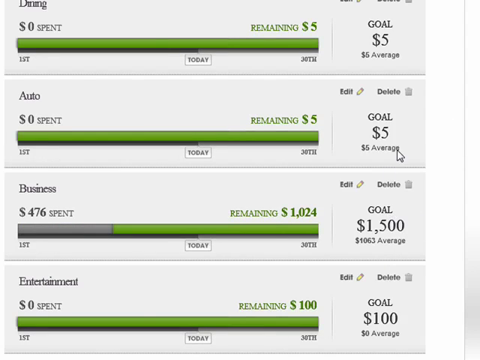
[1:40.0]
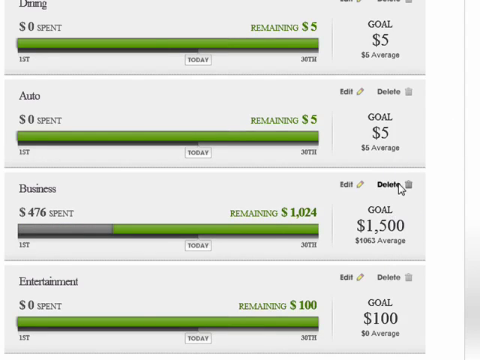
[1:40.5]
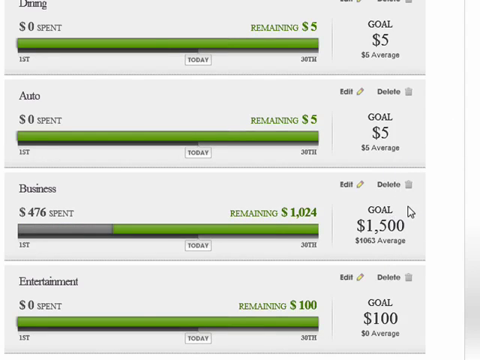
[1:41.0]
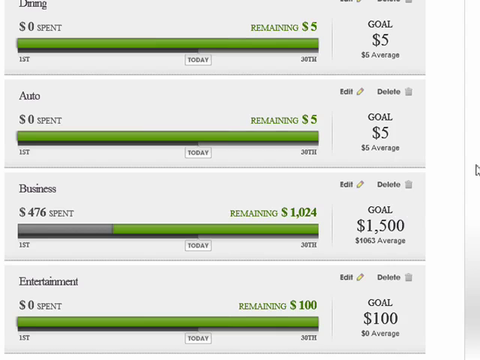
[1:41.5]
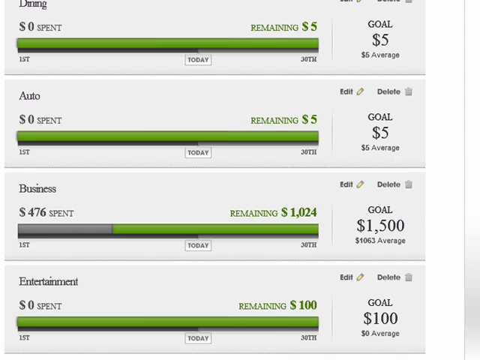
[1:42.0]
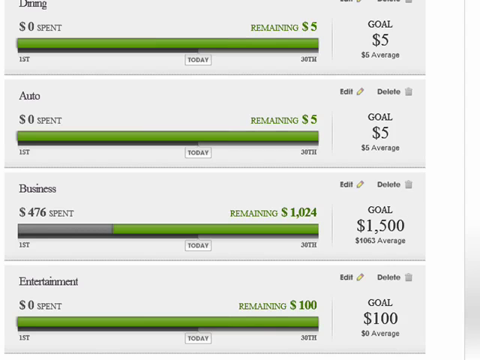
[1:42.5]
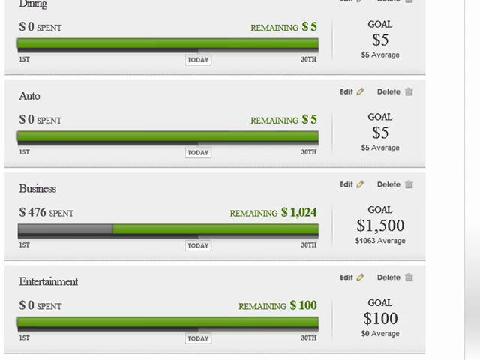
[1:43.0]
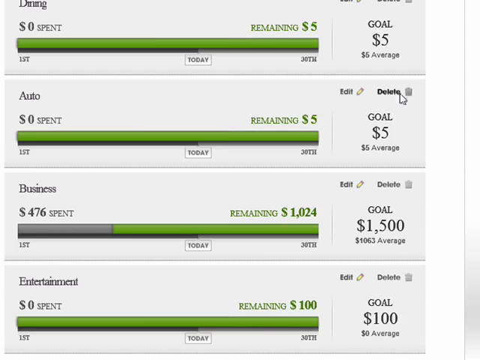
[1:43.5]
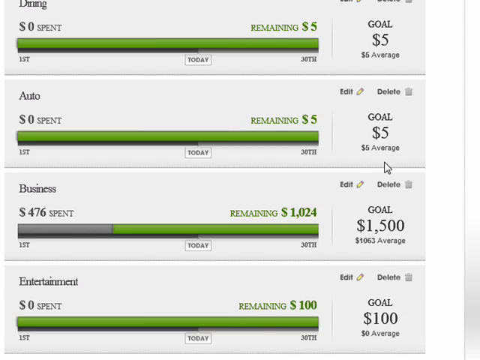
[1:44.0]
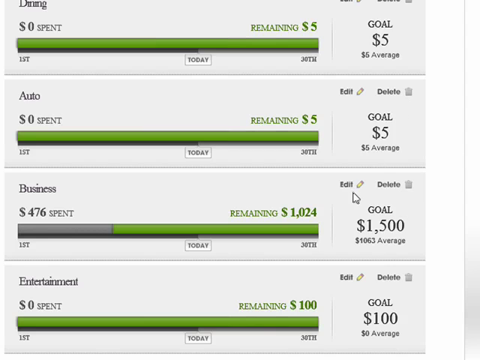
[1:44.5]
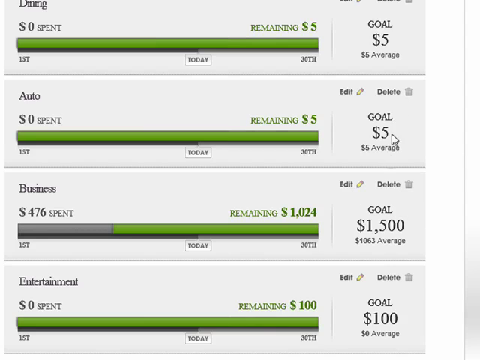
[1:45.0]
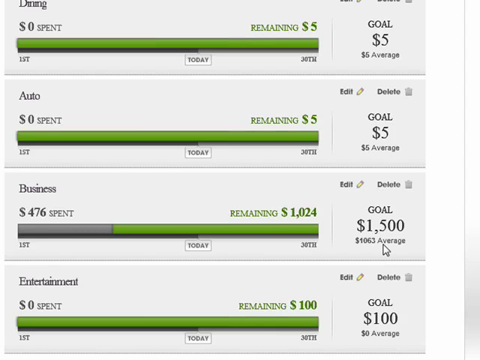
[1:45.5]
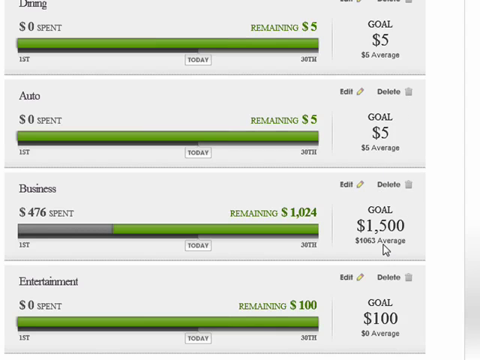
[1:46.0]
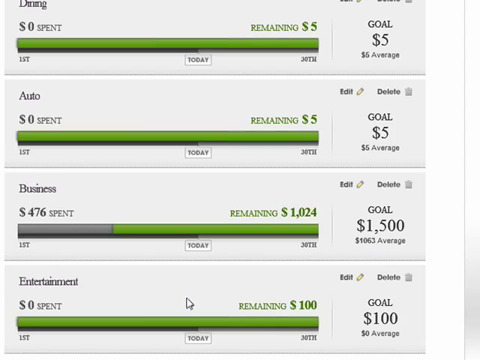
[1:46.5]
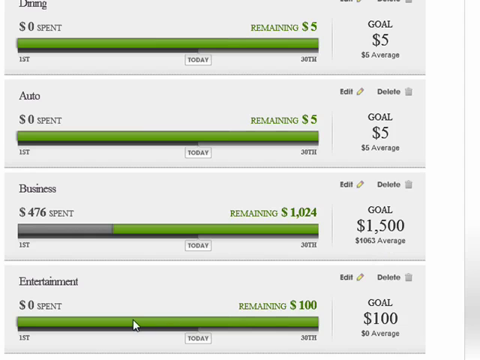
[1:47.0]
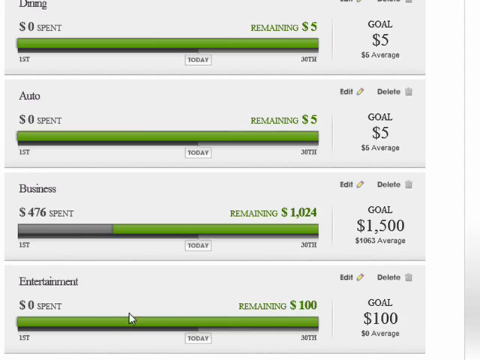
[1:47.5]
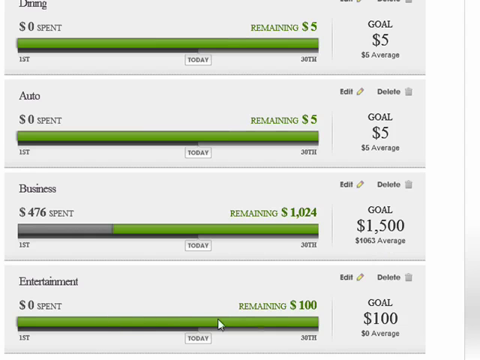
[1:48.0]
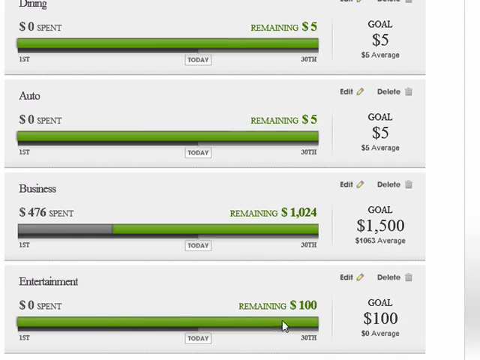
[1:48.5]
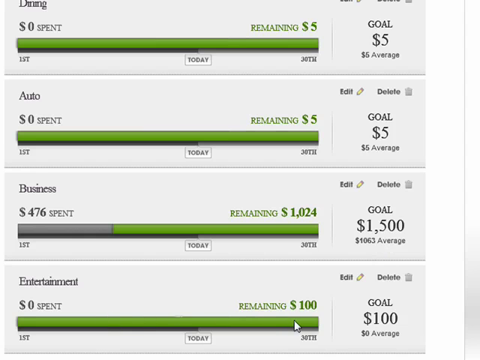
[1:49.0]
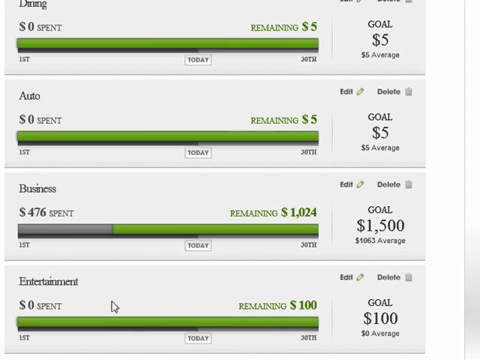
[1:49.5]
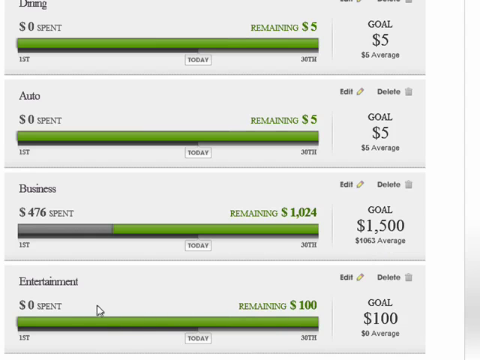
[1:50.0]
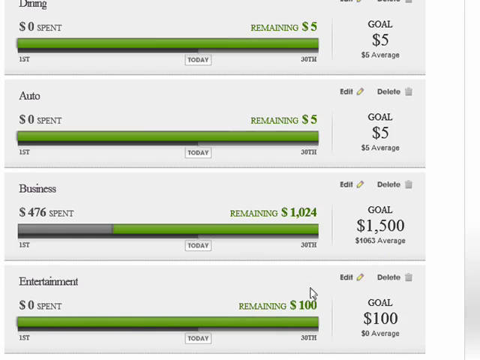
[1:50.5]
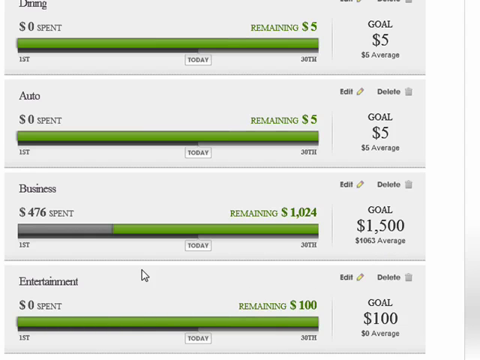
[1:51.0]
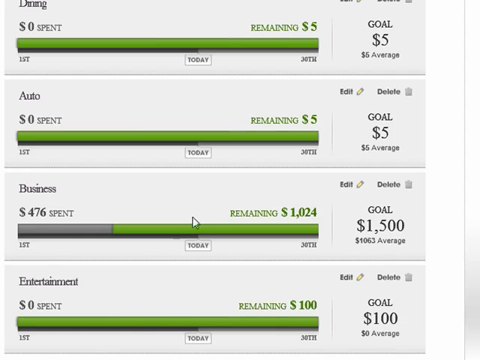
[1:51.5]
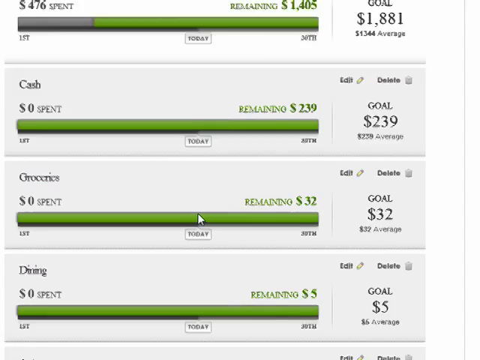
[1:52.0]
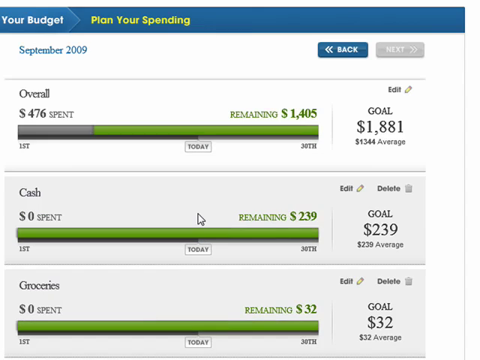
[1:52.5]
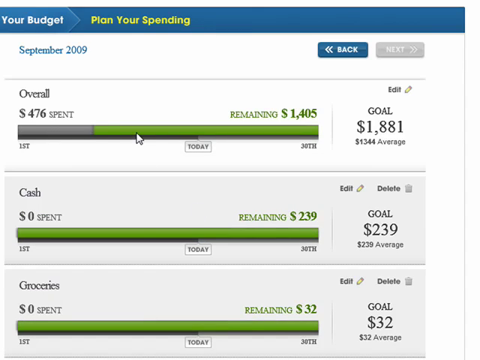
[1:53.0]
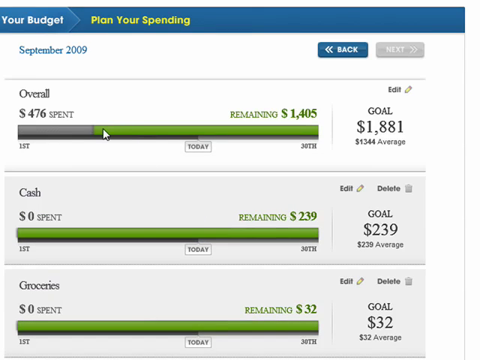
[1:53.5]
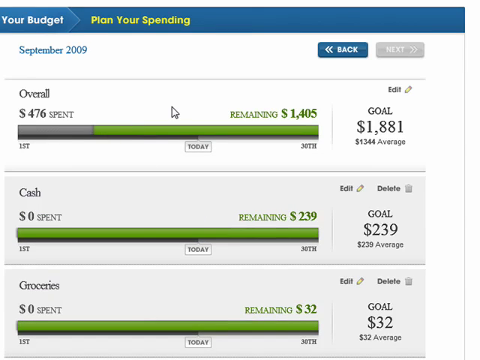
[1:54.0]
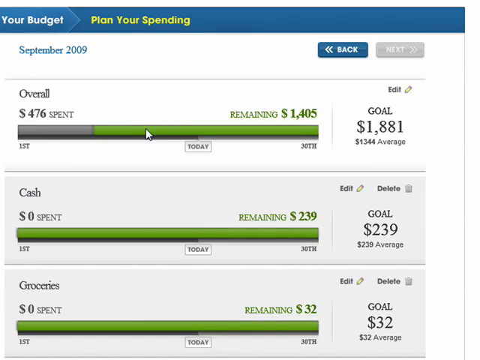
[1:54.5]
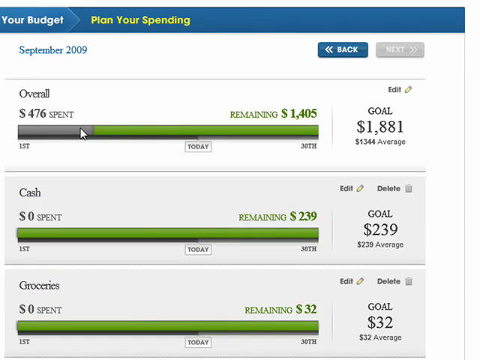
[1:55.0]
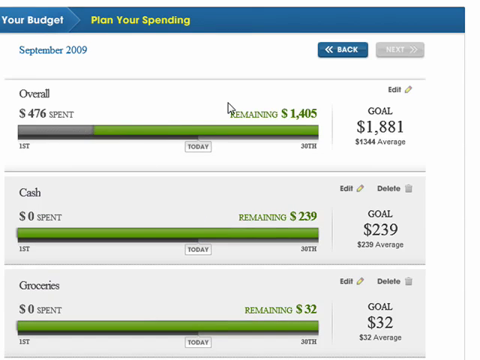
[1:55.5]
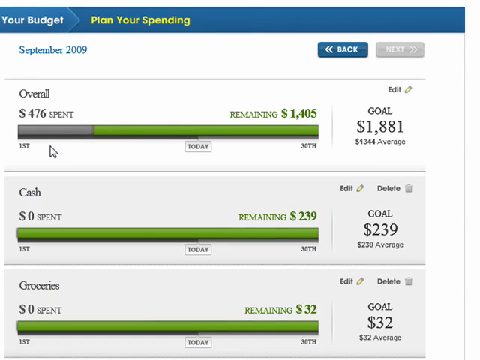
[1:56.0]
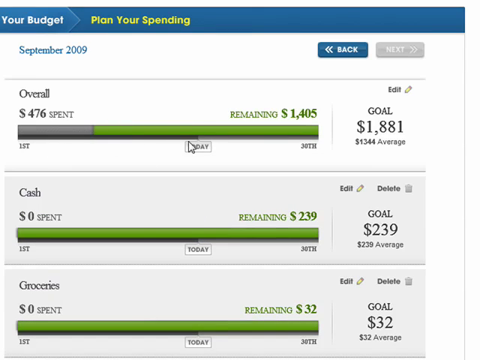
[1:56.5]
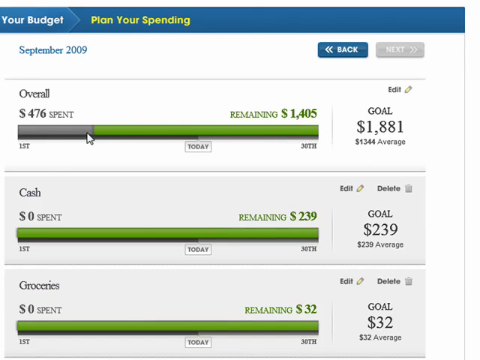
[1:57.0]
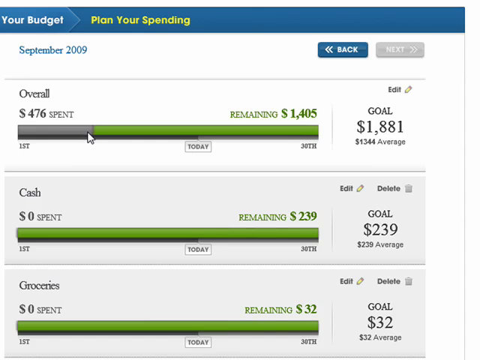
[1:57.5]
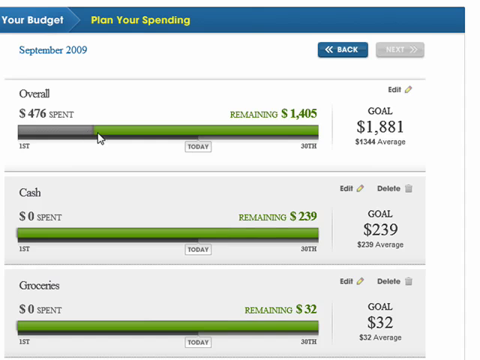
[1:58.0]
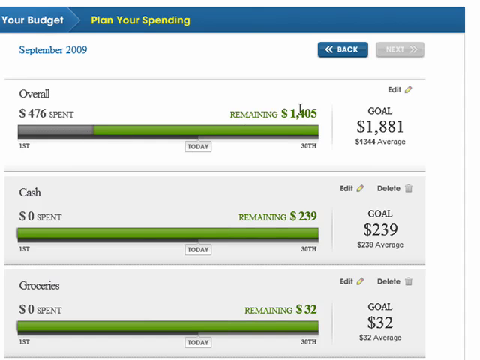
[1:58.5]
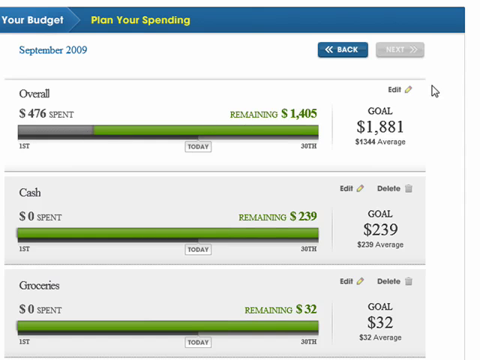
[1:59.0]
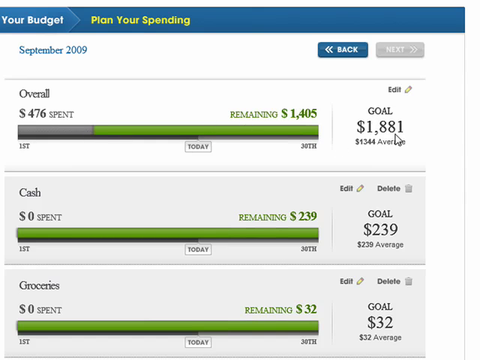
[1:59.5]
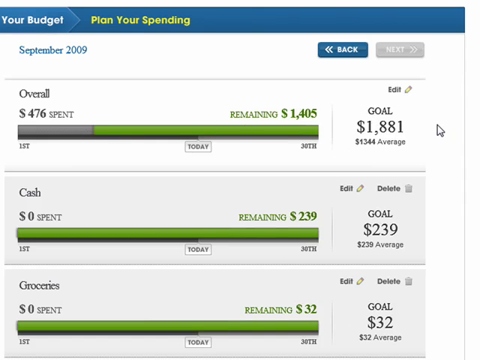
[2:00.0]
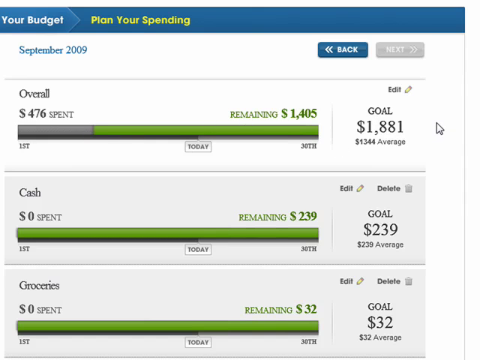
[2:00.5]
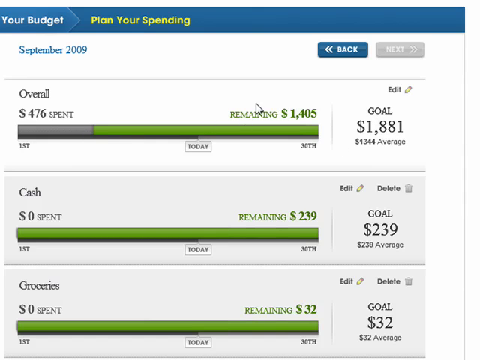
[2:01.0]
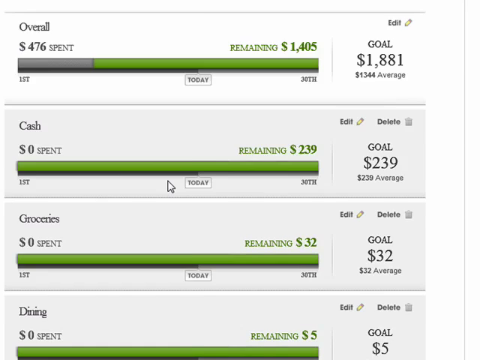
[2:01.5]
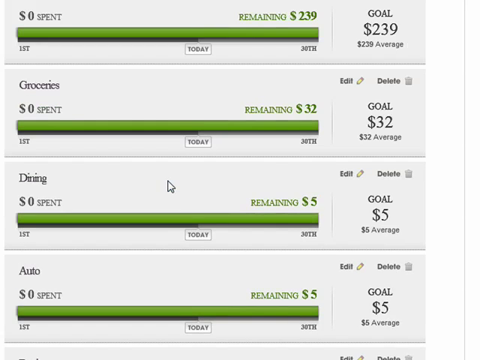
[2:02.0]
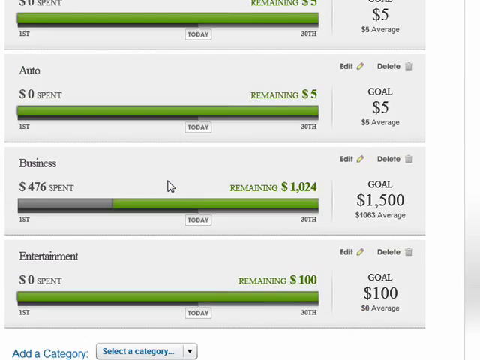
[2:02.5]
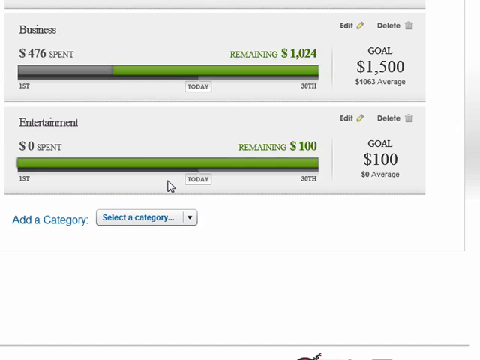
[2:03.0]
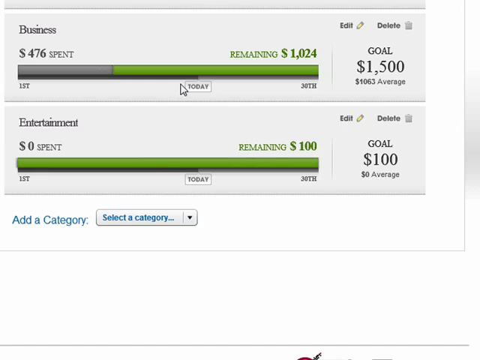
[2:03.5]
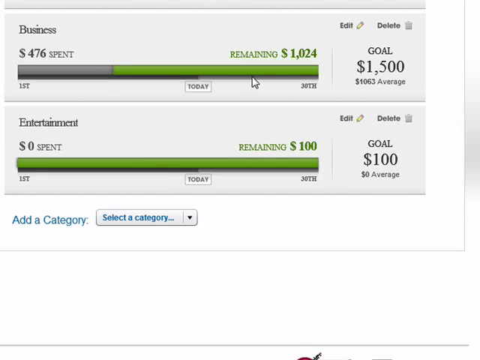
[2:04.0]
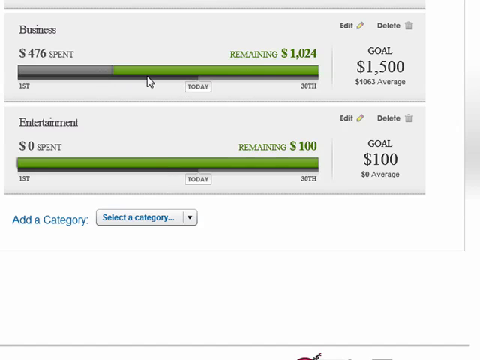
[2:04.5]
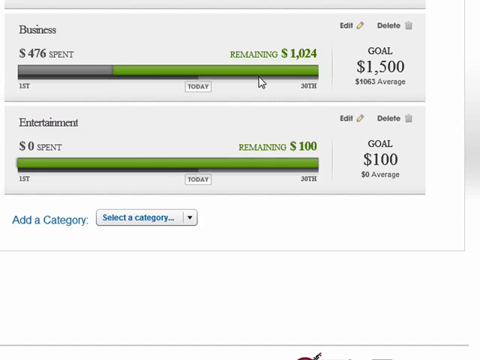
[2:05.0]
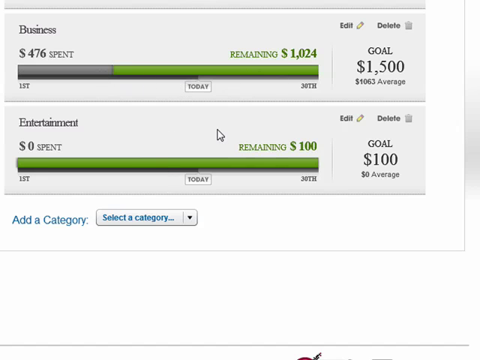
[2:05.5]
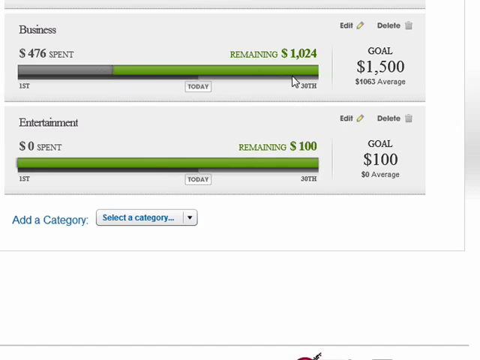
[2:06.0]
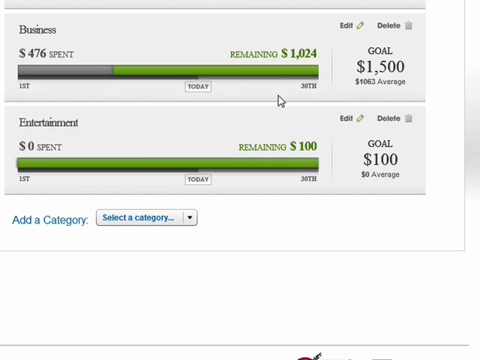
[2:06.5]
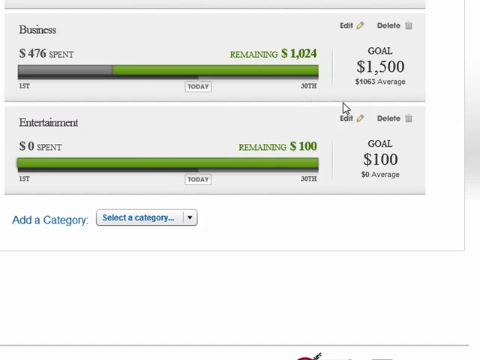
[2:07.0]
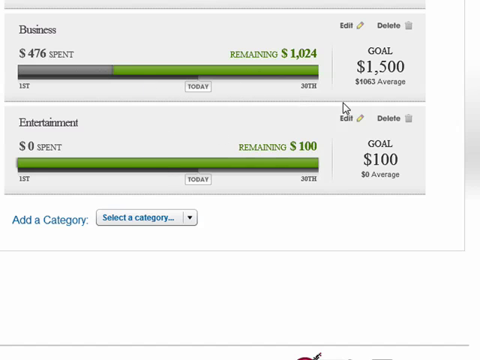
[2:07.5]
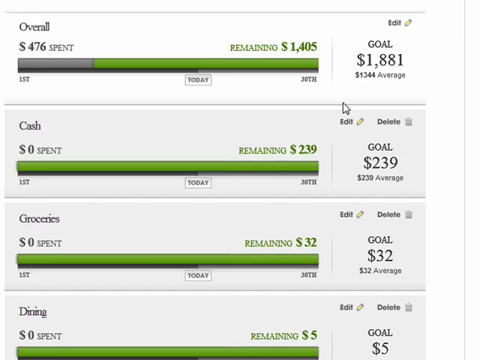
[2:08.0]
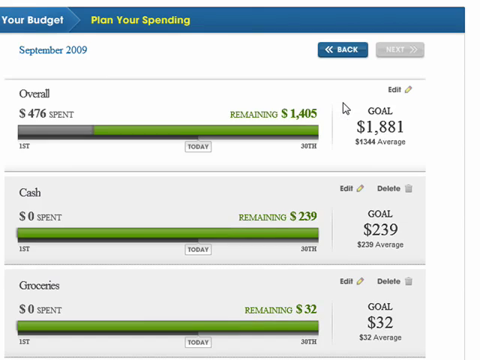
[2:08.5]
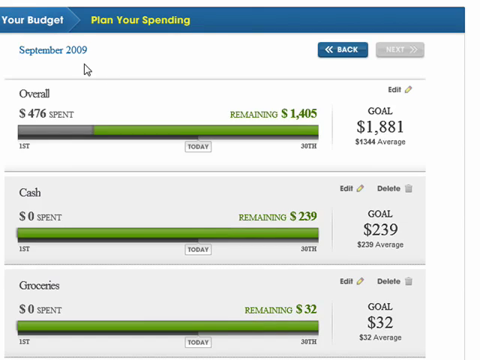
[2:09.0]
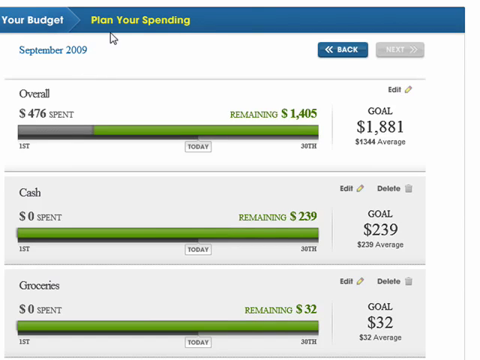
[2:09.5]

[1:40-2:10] The user hovers over the business section, moves the cursor out of the screen and back in, moves it up and down over a couple of the sections and from left to right, then scrolls back to the top, where the goal reads 1,881. The user scrolls all the way back down and clicks on or hovers over the business category, then scrolls back up and down. At the end, the cursor is over the tracked month and year, September 2009, written in blue text.